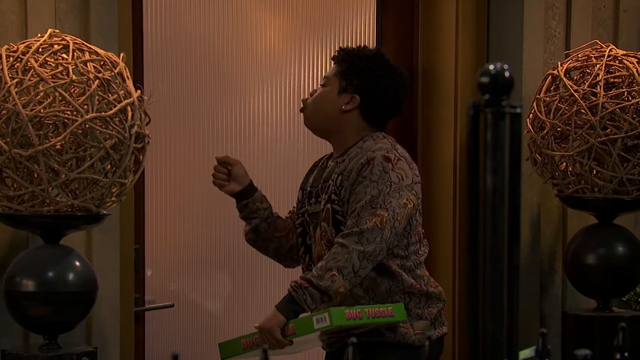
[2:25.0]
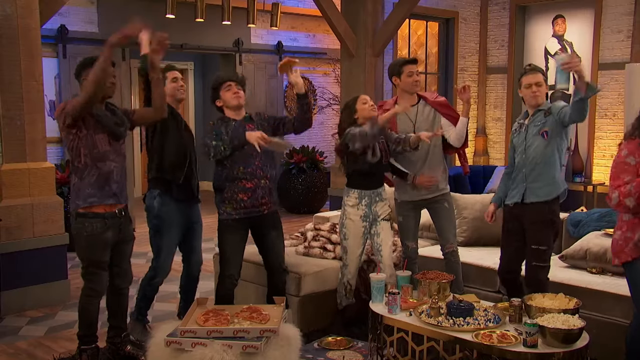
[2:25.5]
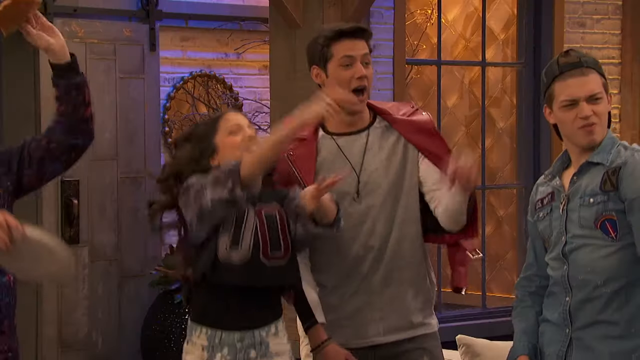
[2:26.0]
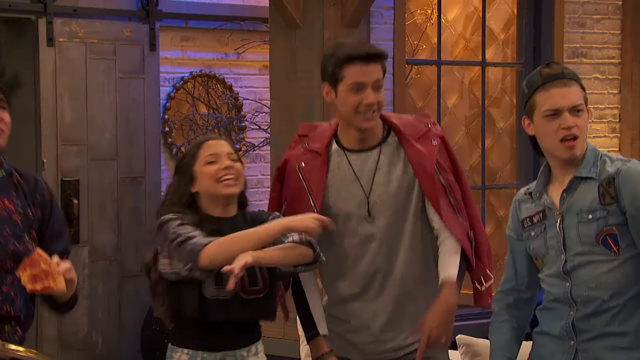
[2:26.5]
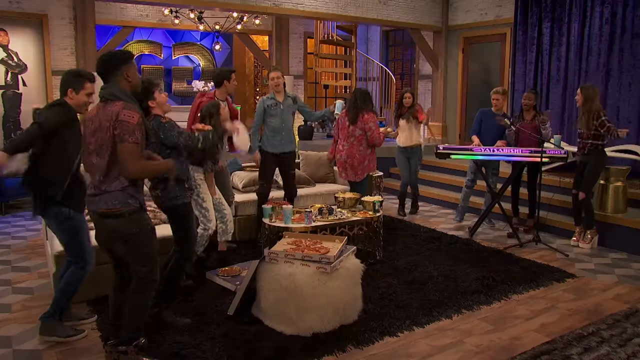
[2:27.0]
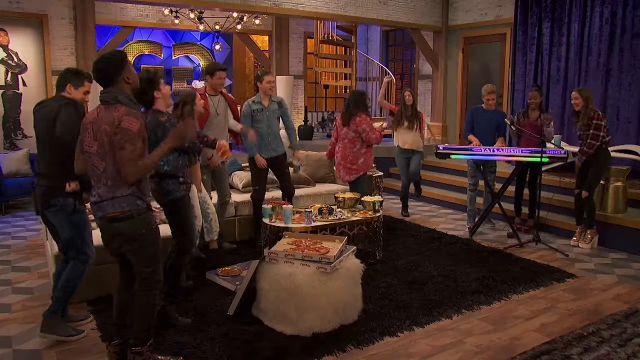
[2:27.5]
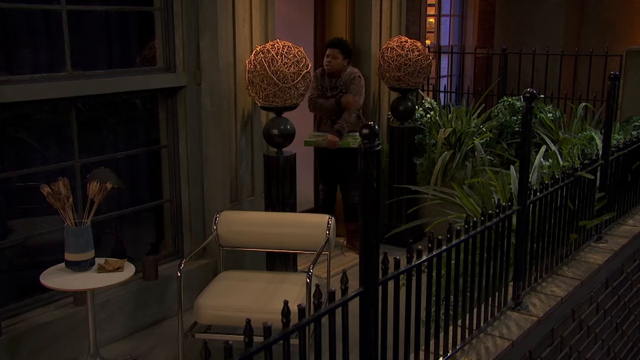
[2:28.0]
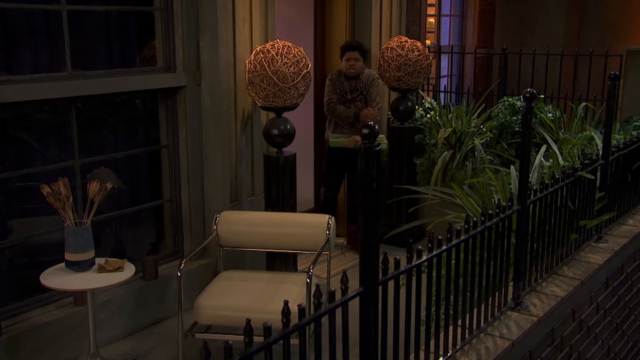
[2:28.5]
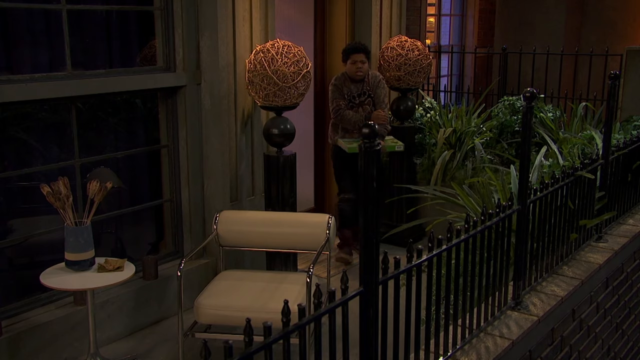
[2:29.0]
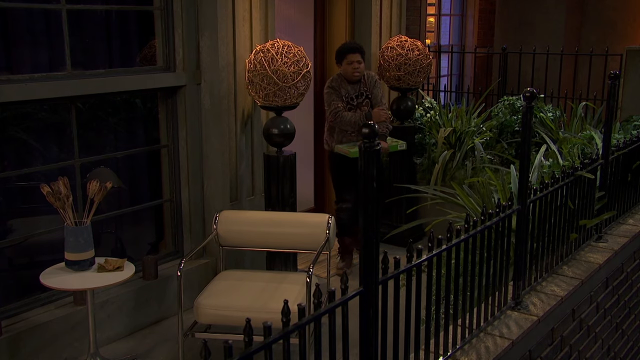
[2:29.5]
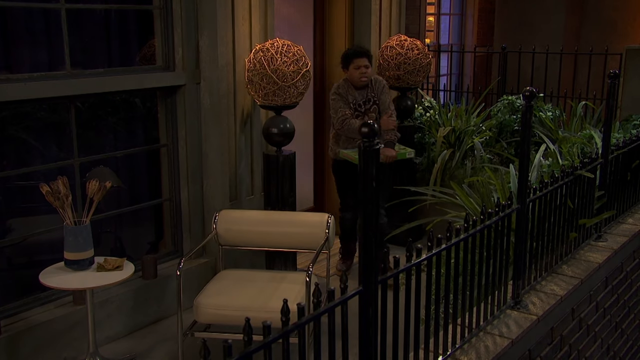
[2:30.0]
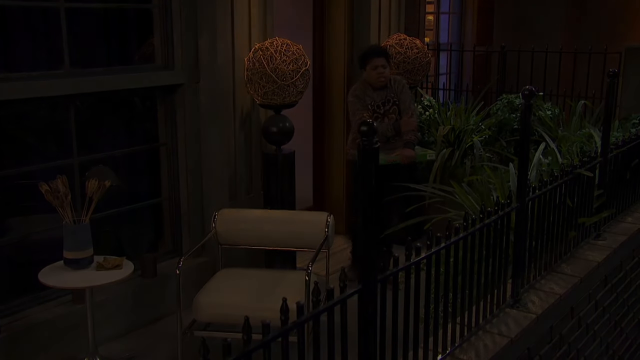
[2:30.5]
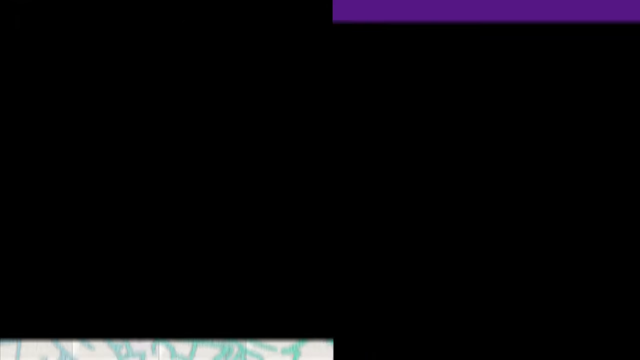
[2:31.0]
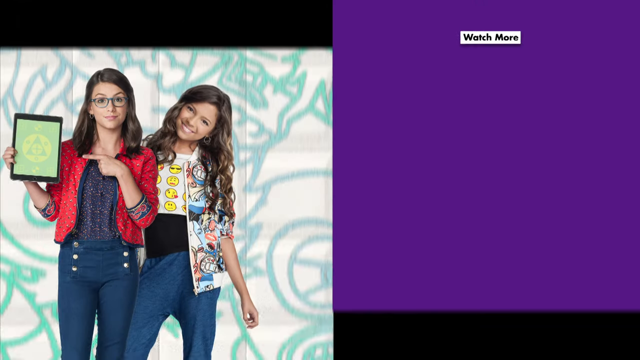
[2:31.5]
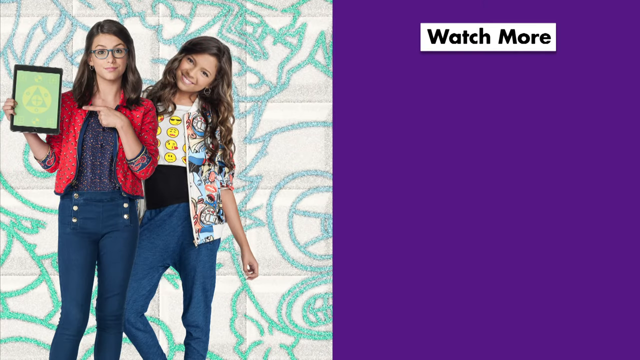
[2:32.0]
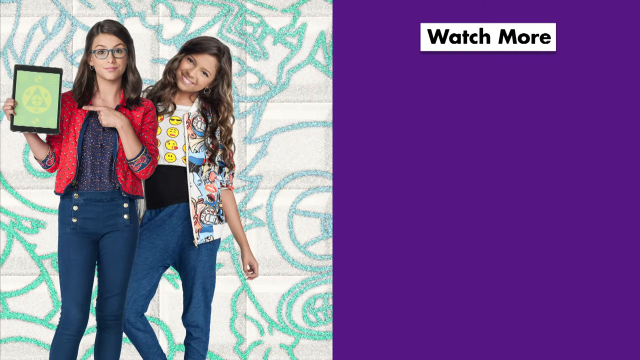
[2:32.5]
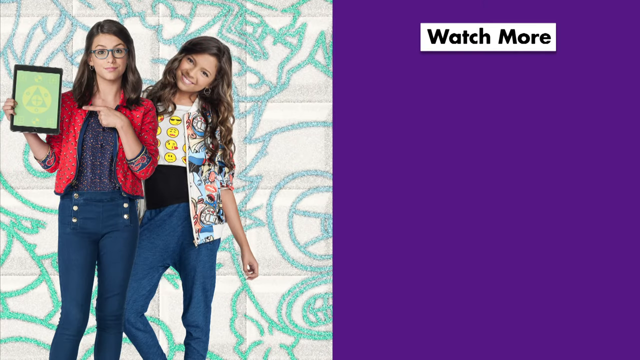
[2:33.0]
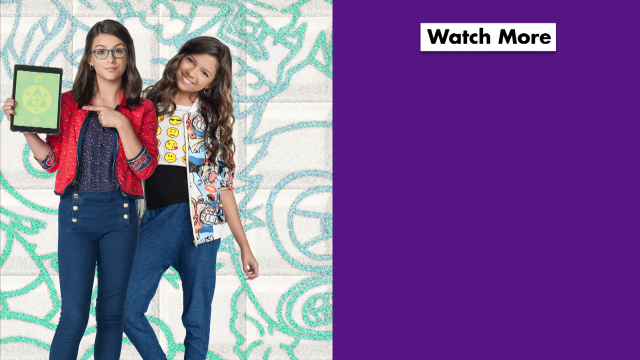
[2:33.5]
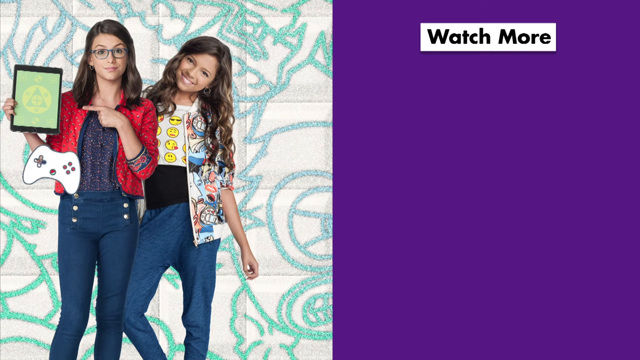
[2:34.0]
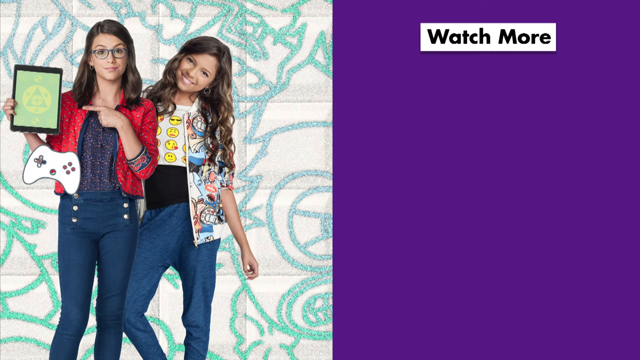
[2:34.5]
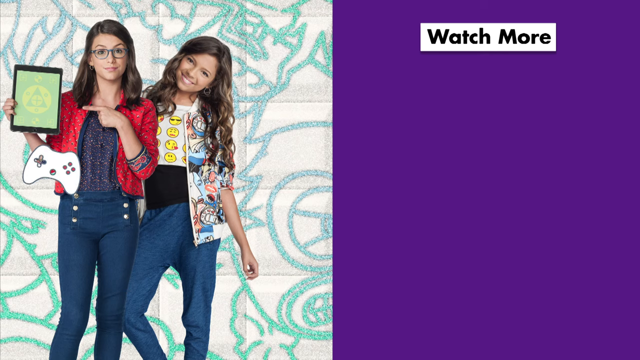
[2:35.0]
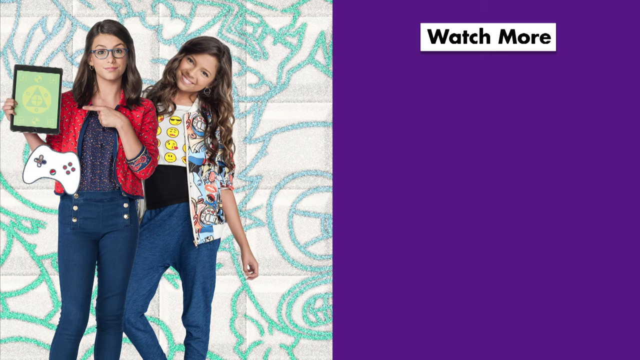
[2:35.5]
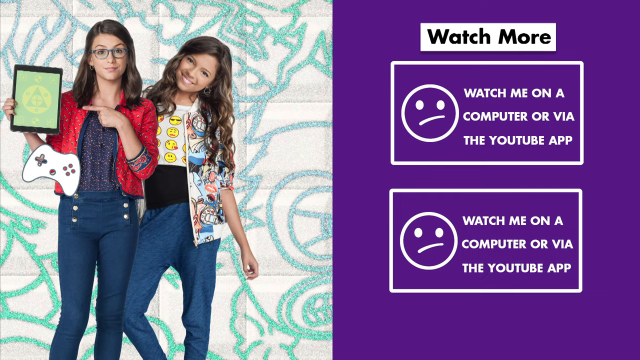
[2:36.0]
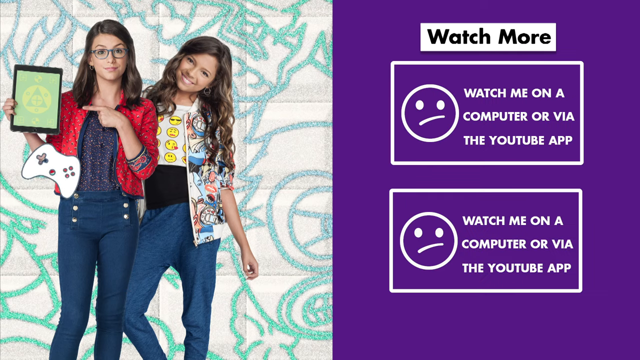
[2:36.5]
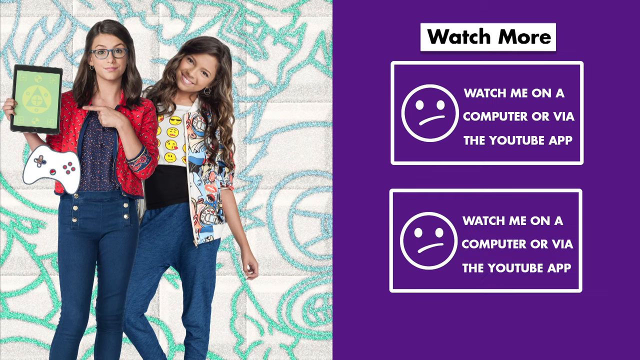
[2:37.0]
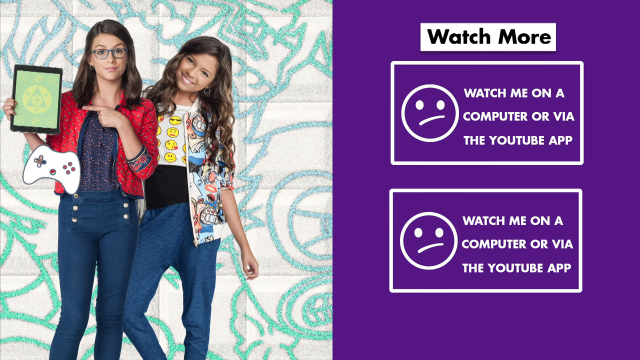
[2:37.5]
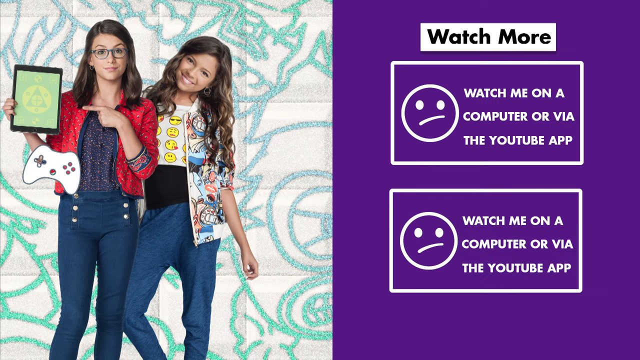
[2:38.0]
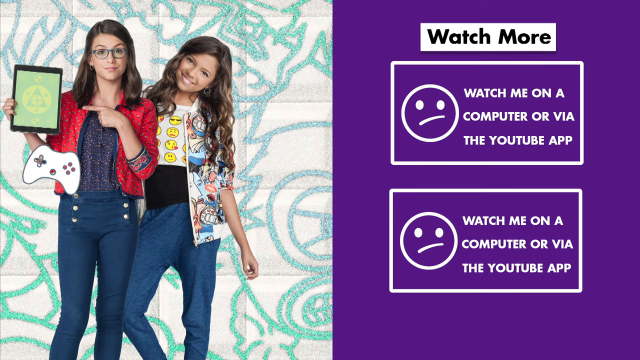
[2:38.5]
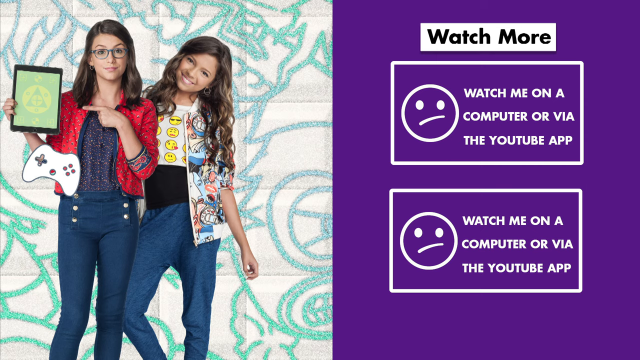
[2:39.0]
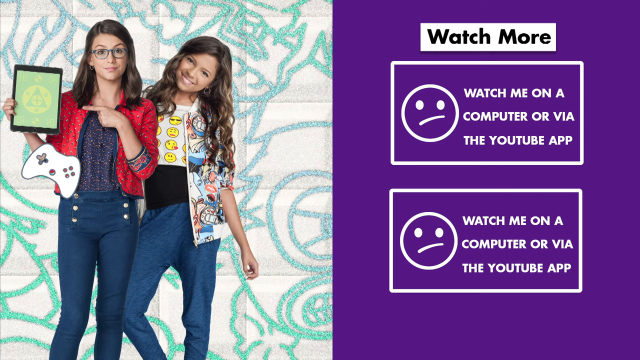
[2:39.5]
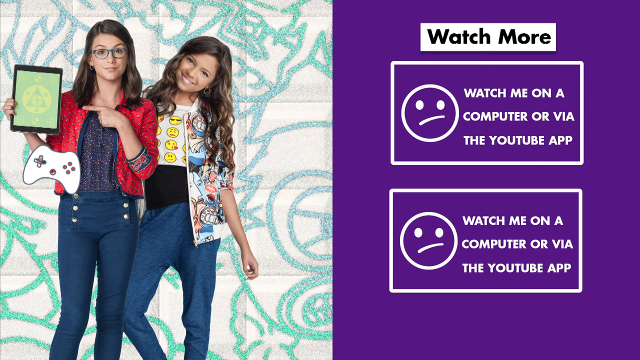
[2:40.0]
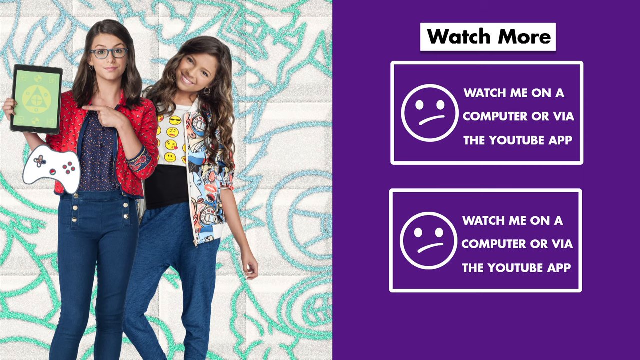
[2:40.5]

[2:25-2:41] The young individual with the board game is outside, trying to open the door and yelling at his friends inside. He indicates that he is very cold, rubbing his shoulders, and walks away dispiritedly from the door. Inside, all of the young people in the warm room are dancing as the music is played by one of the other young individuals in the room. The video then goes to black and asks to watch more, giving the viewer an option to watch on other devices.